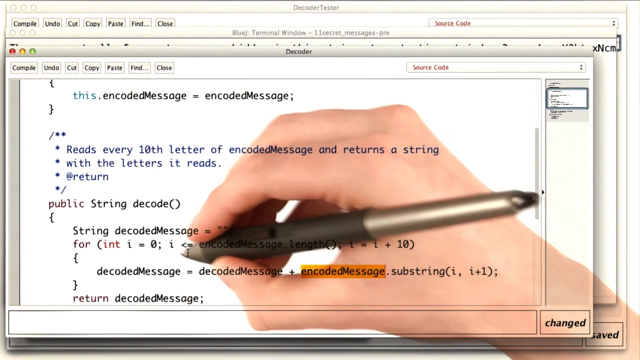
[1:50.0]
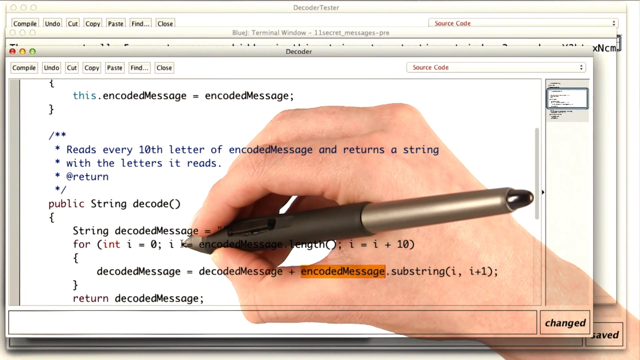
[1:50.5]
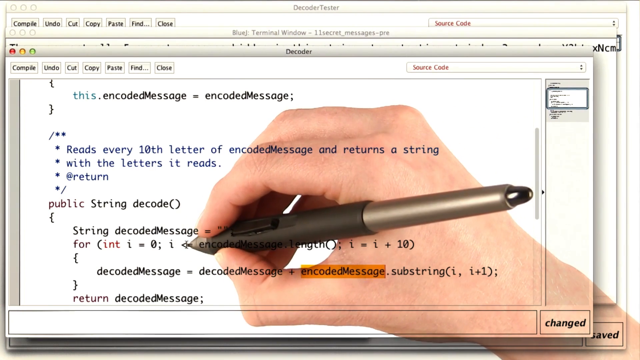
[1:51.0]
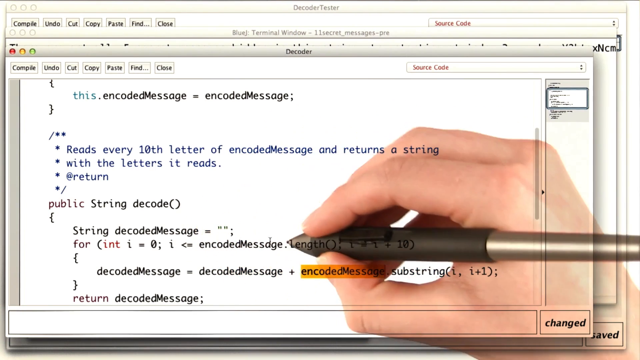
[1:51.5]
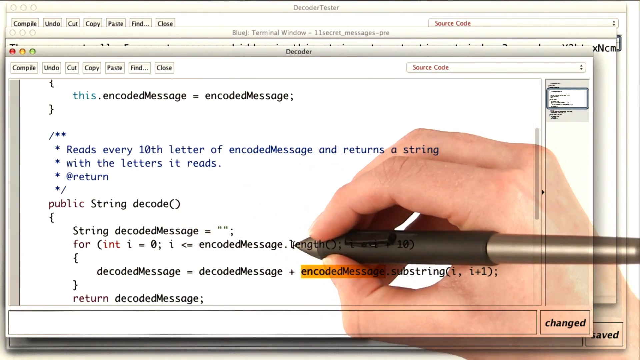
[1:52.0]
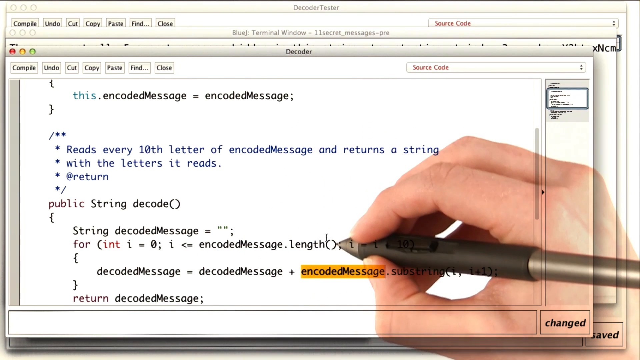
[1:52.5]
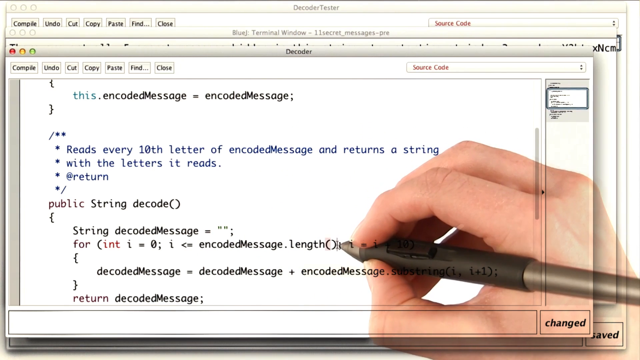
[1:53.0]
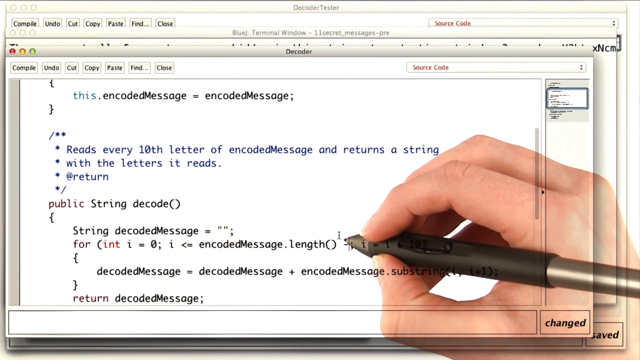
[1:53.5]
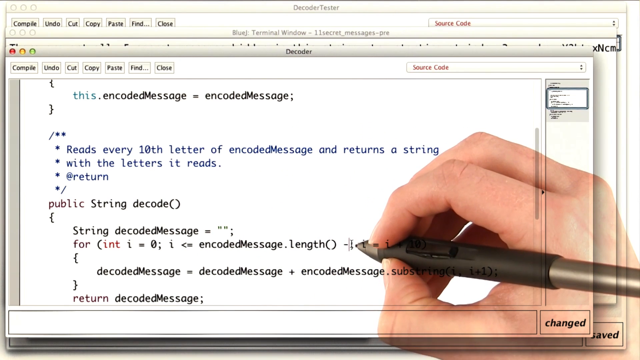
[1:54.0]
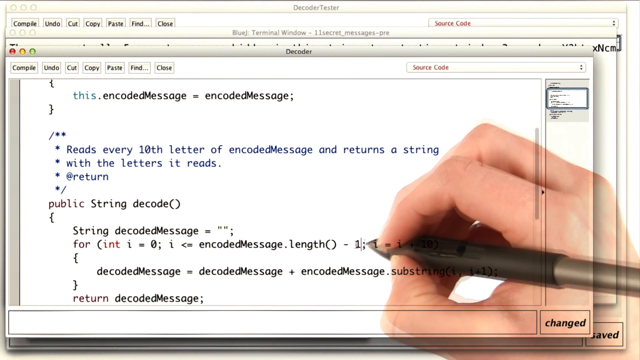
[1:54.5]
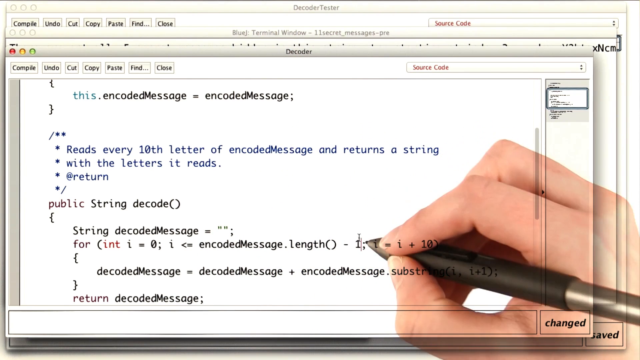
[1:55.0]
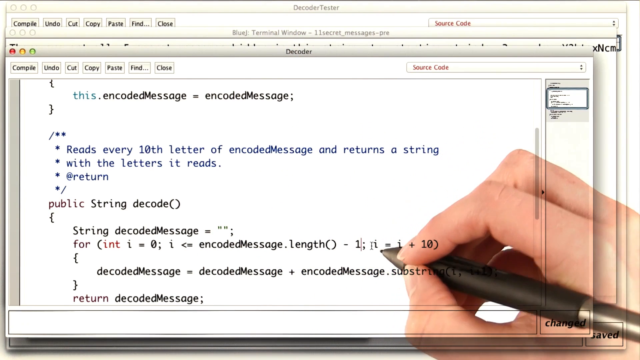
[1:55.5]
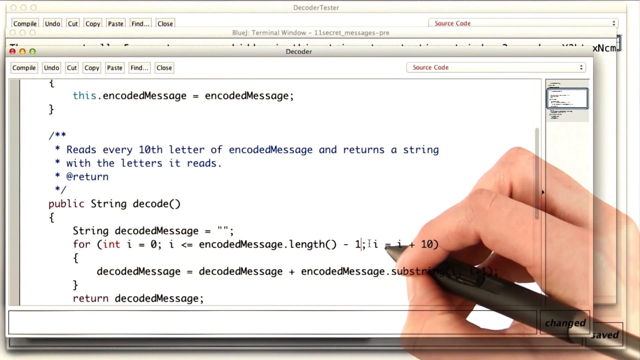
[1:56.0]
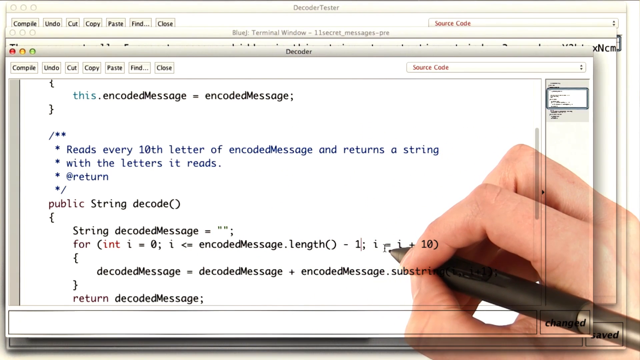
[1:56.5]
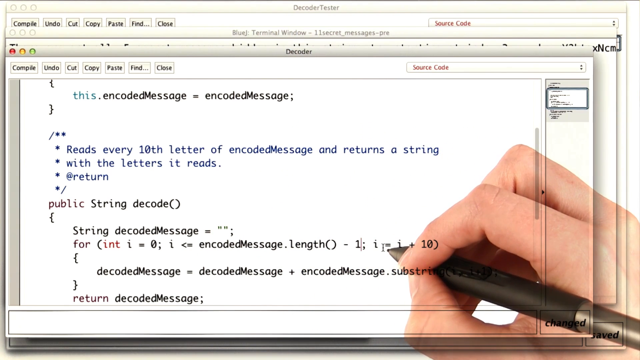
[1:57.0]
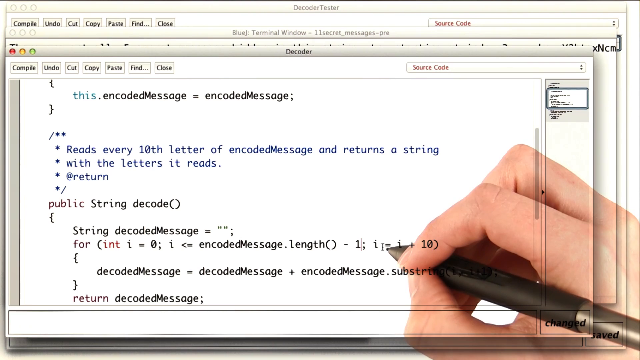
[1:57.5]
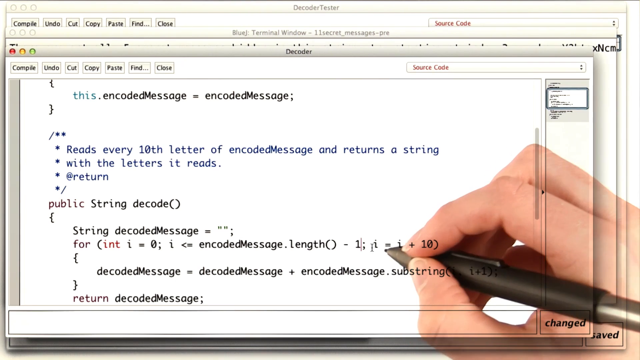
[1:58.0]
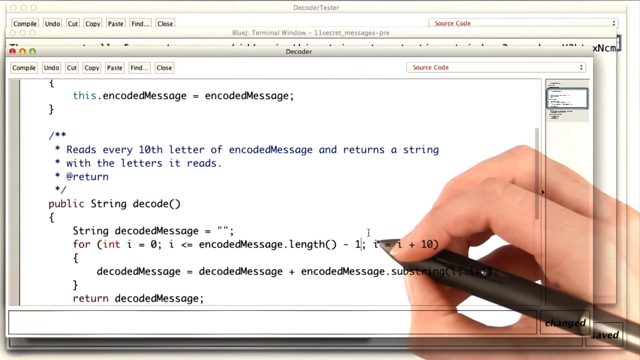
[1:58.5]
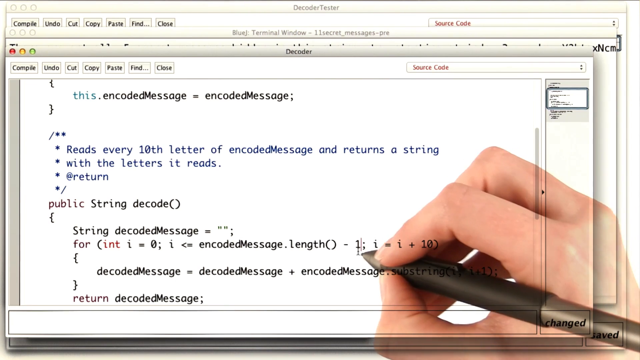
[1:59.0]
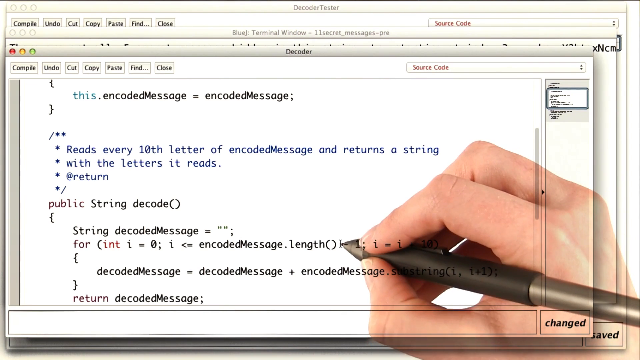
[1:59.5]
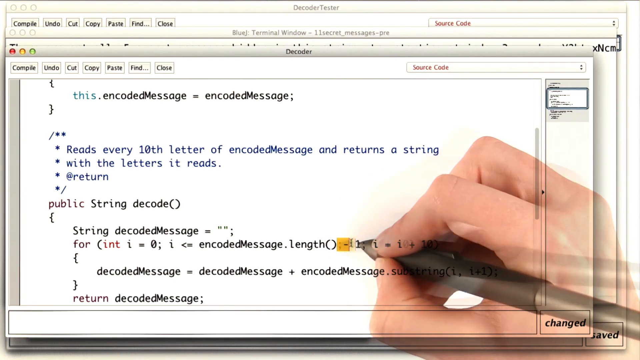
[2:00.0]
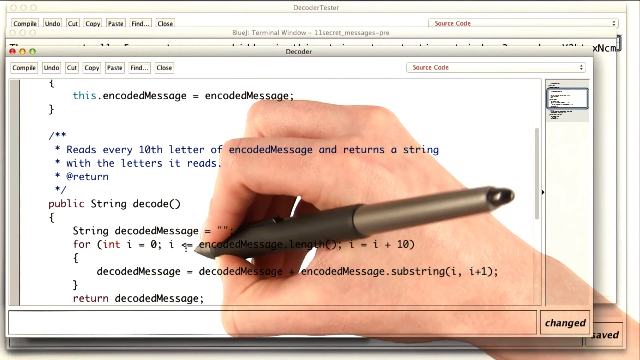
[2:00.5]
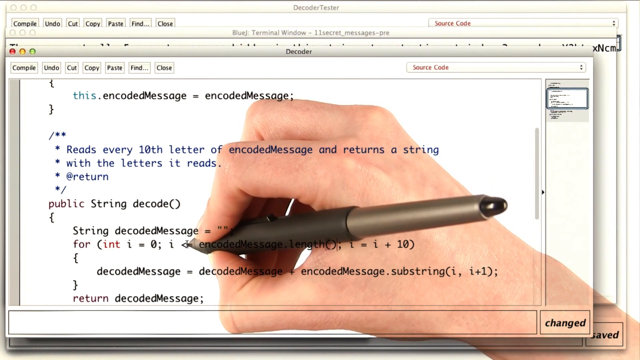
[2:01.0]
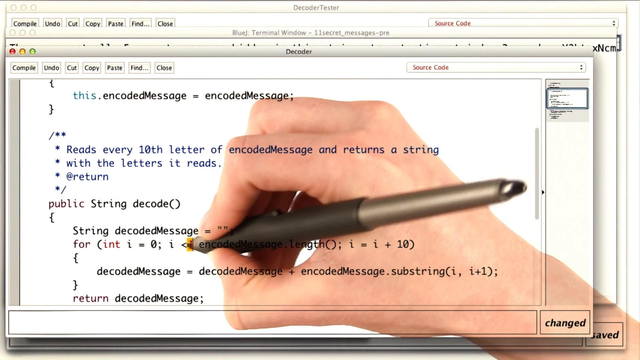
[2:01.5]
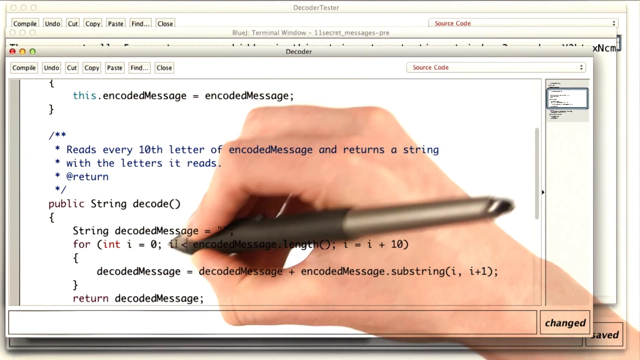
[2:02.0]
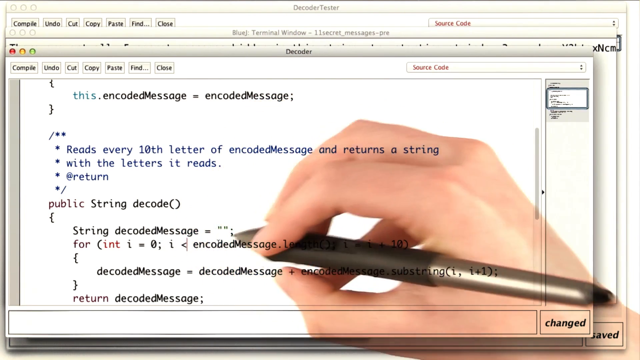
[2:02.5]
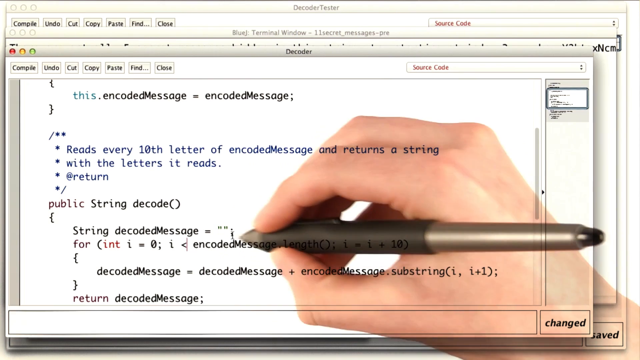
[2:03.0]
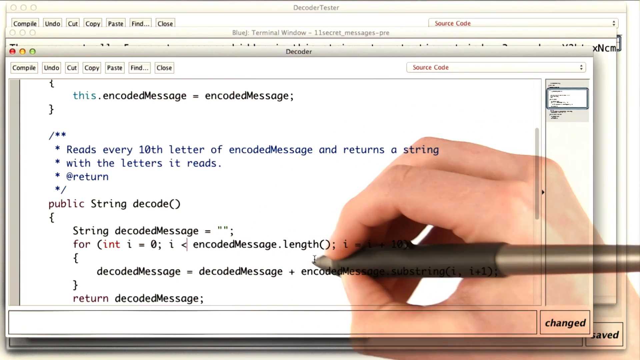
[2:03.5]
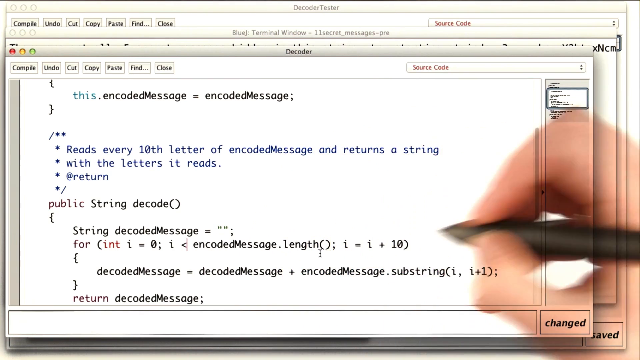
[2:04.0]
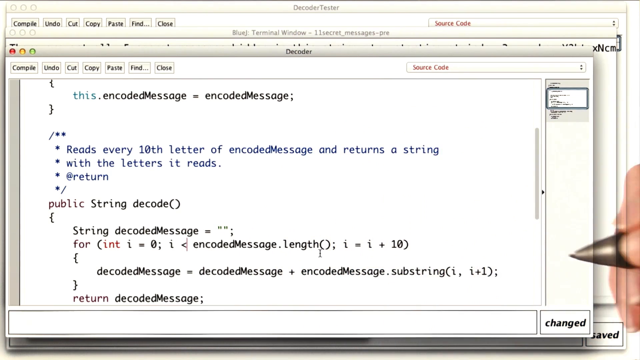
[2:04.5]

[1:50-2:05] The hand with the black pen moves and highlights different sections of the page. The person adds the number 1 after encoded message length, then highlights minus 1, and removes different sections of the string decoded message, doing this for some time. At the top of the message the text reads "this encoded message equals encoded message", "reads every 10th letter of encoded message and returns a string with letters it reads", "return public string decode", "string decoded message", "for int i equals 0", "i is less than encoded message dot length", "i equals i plus 10", "substring i comma i plus 1" and "return decoded message".